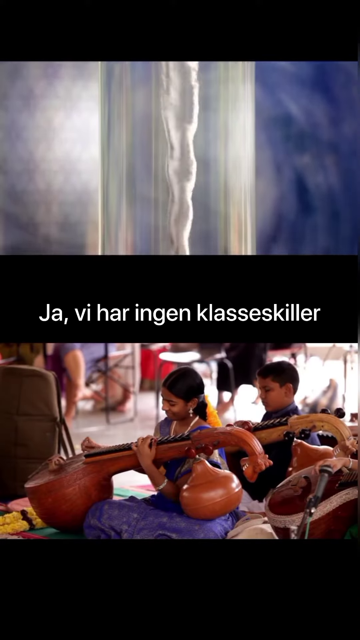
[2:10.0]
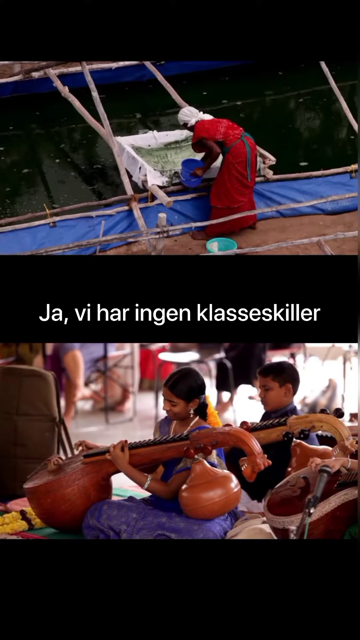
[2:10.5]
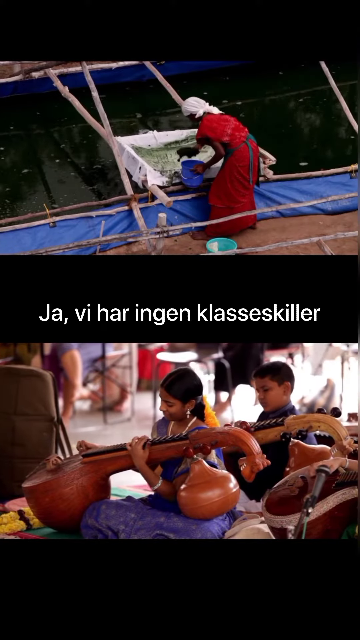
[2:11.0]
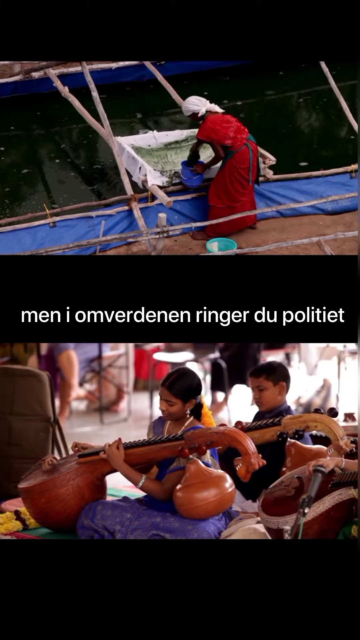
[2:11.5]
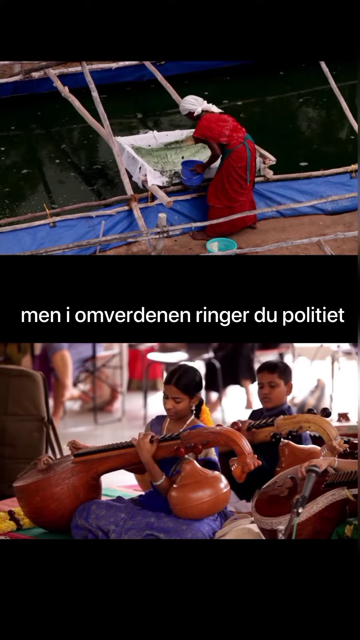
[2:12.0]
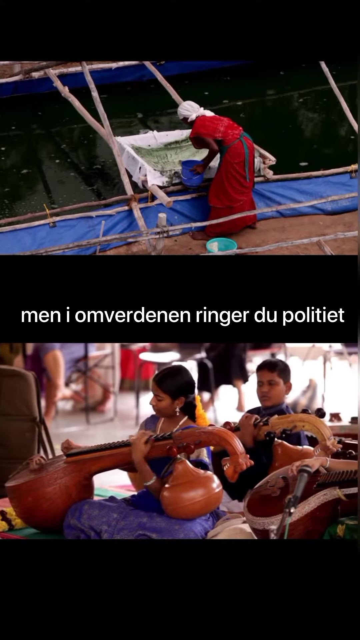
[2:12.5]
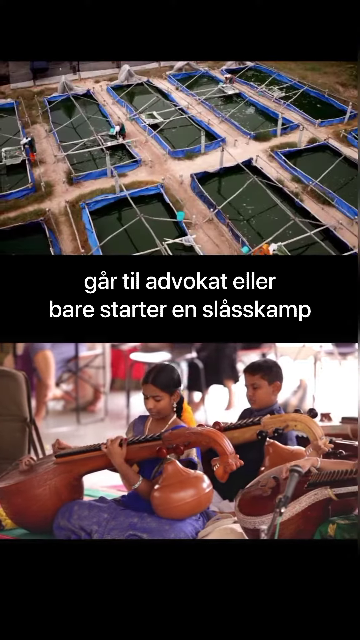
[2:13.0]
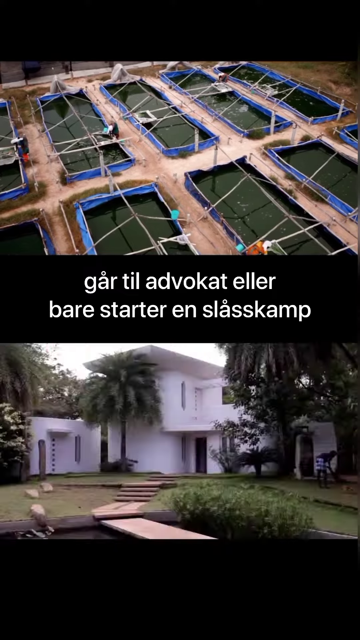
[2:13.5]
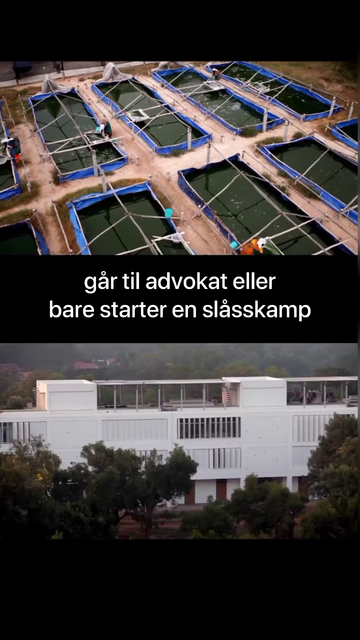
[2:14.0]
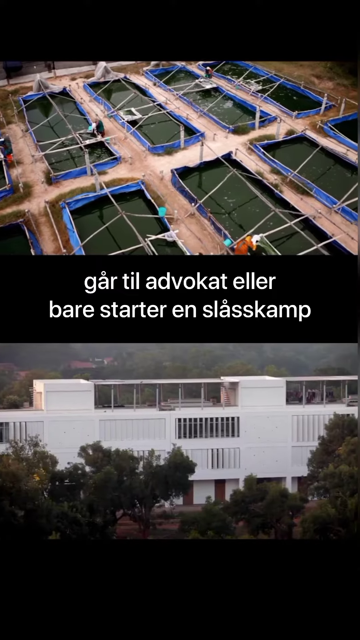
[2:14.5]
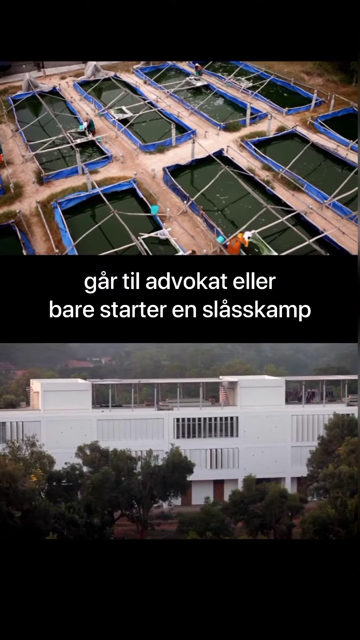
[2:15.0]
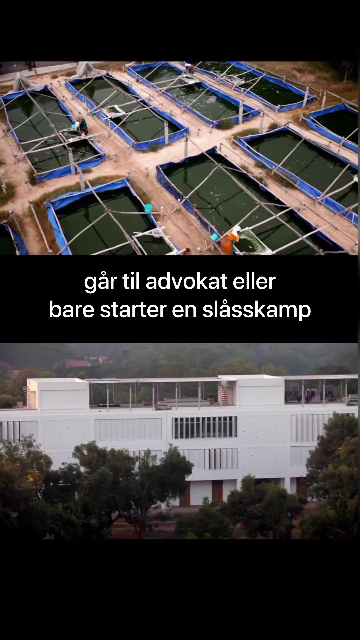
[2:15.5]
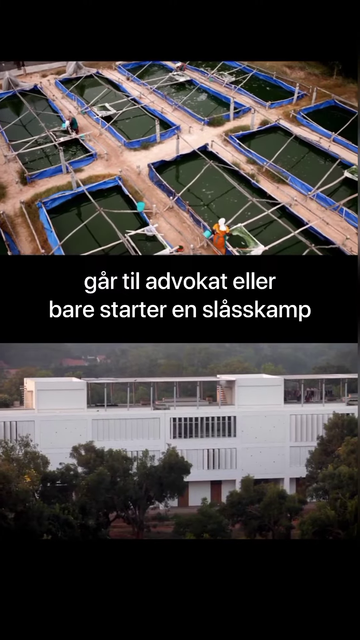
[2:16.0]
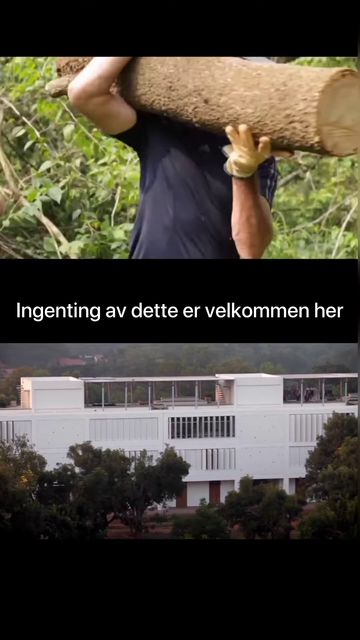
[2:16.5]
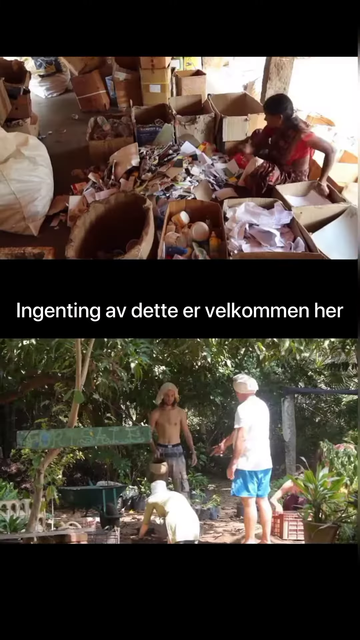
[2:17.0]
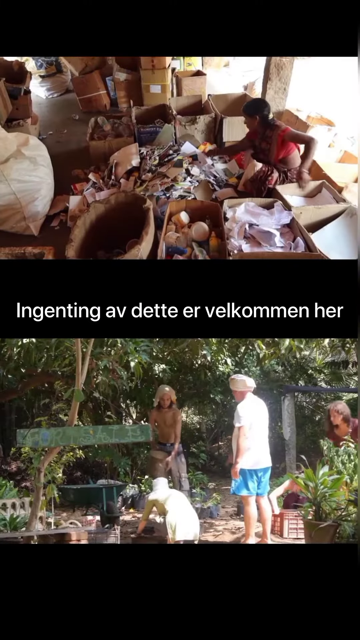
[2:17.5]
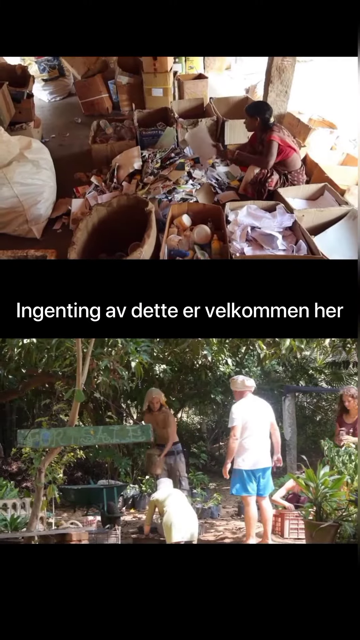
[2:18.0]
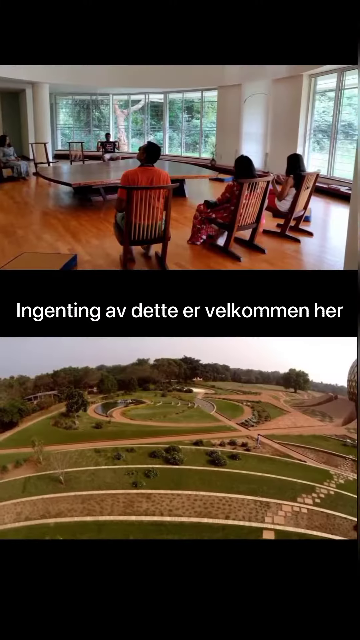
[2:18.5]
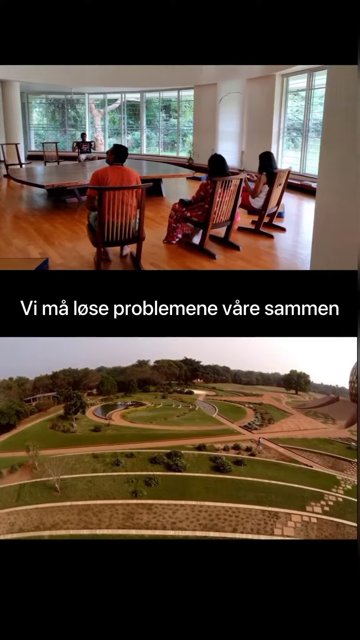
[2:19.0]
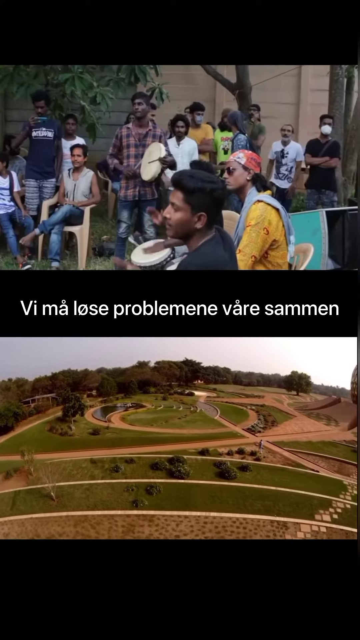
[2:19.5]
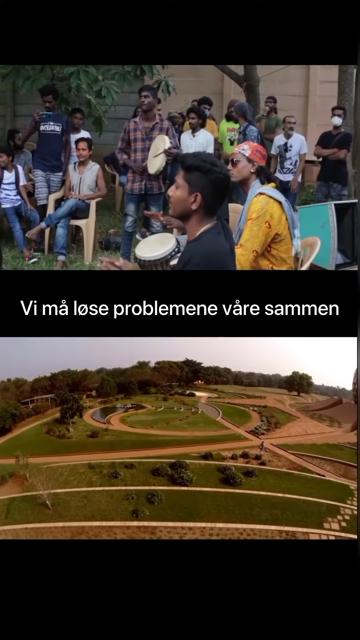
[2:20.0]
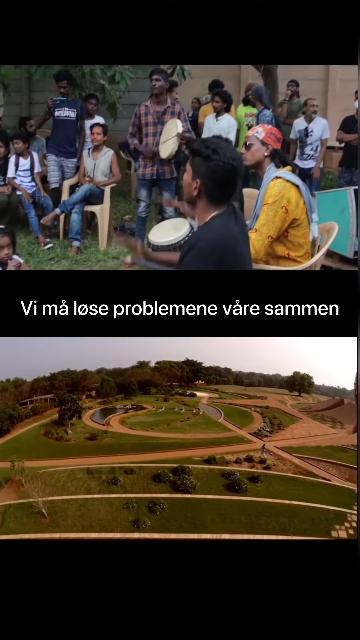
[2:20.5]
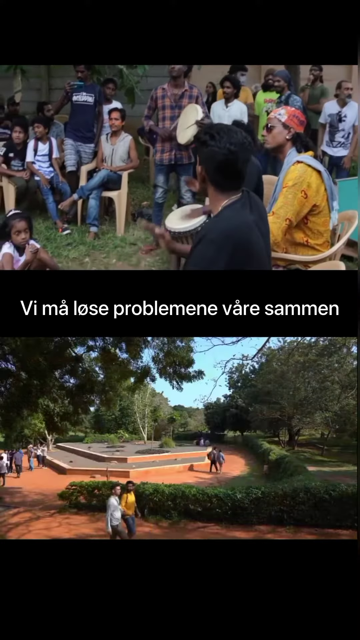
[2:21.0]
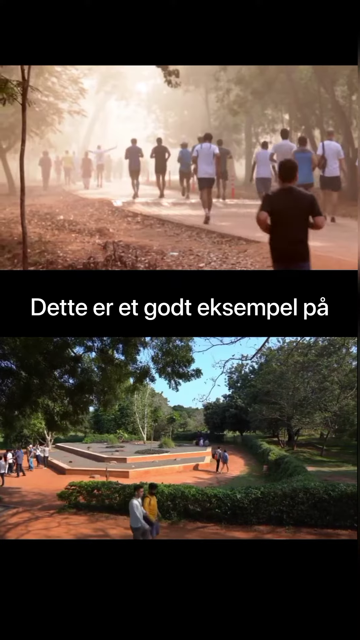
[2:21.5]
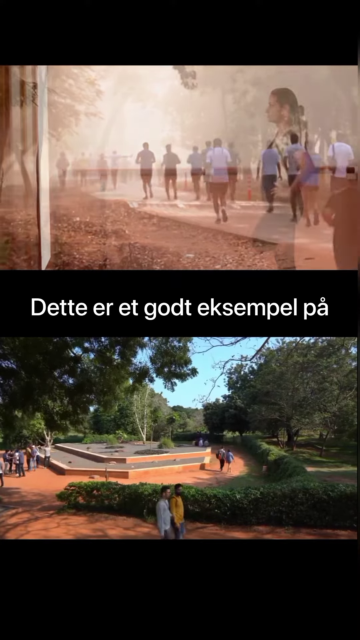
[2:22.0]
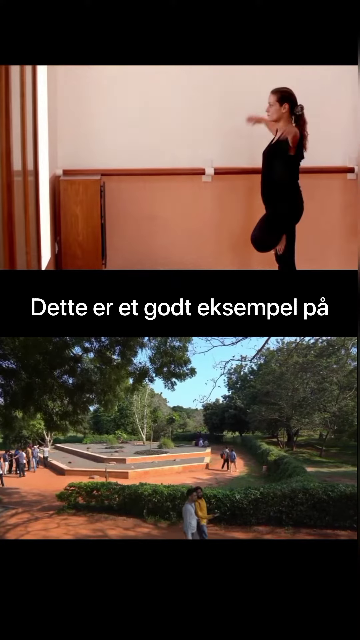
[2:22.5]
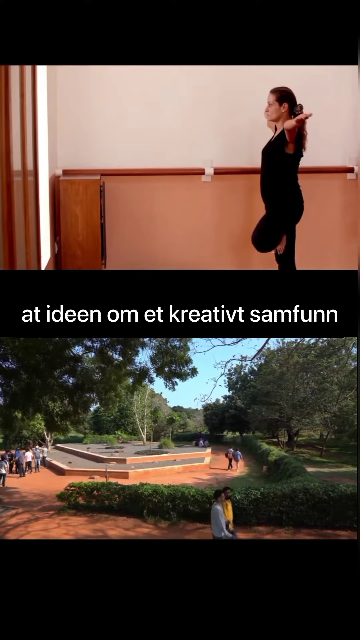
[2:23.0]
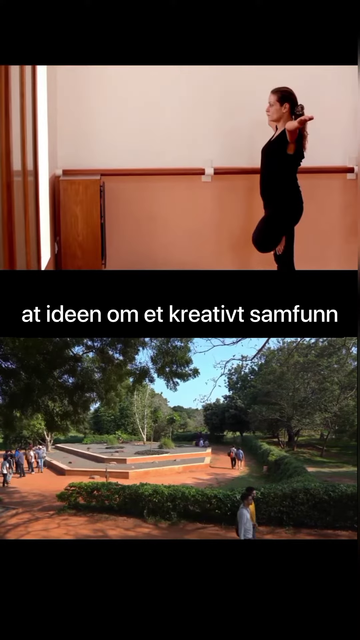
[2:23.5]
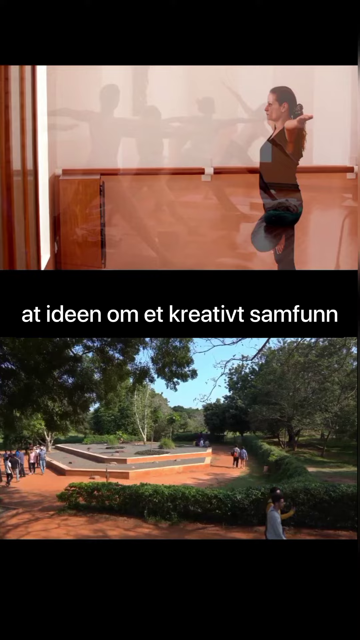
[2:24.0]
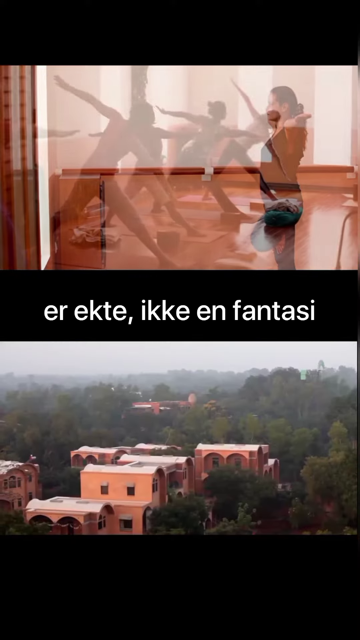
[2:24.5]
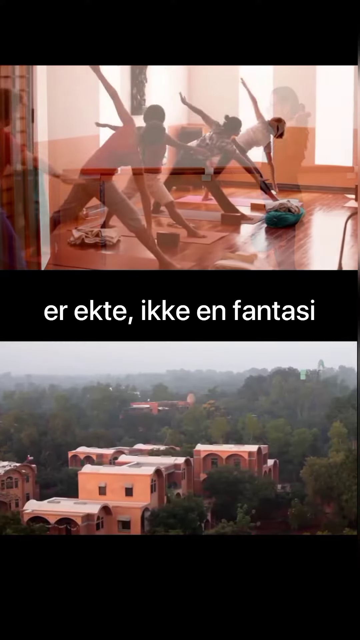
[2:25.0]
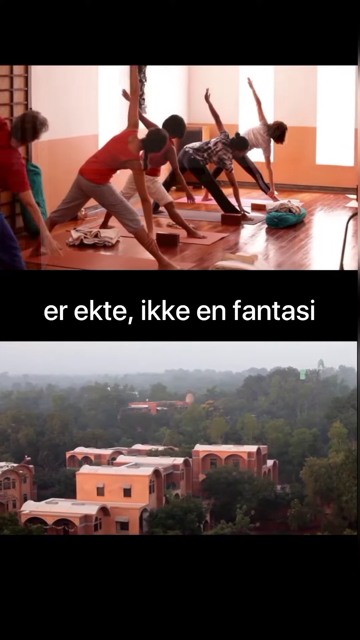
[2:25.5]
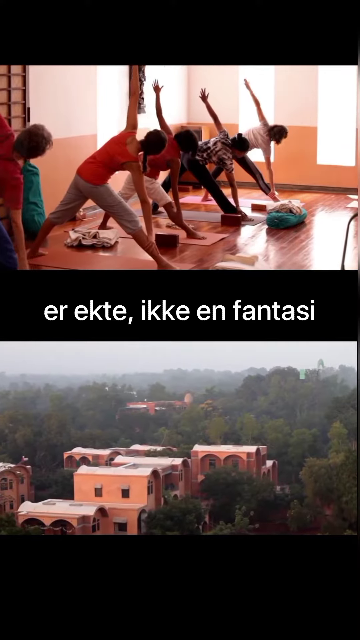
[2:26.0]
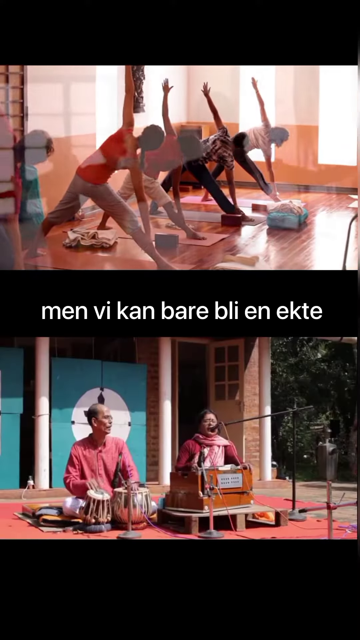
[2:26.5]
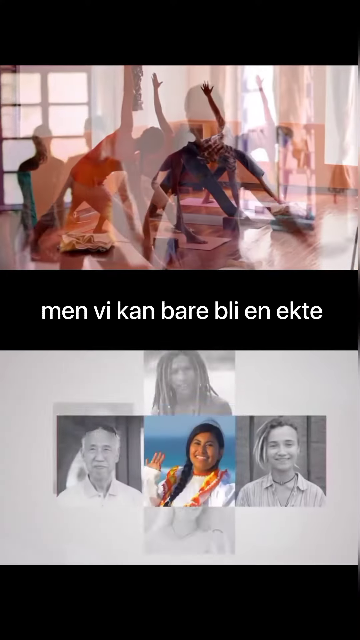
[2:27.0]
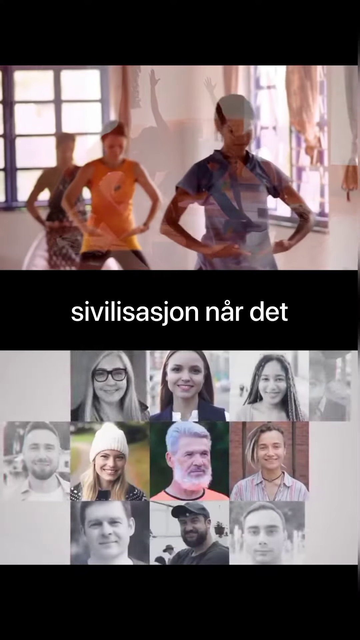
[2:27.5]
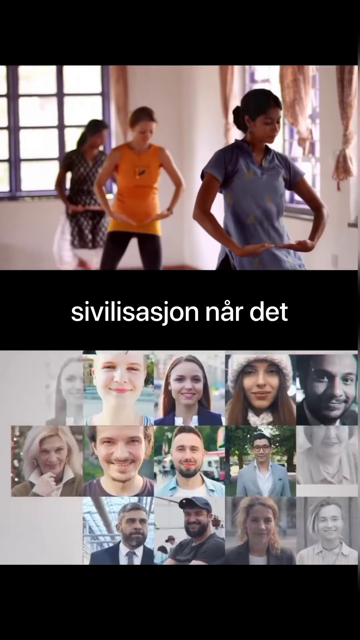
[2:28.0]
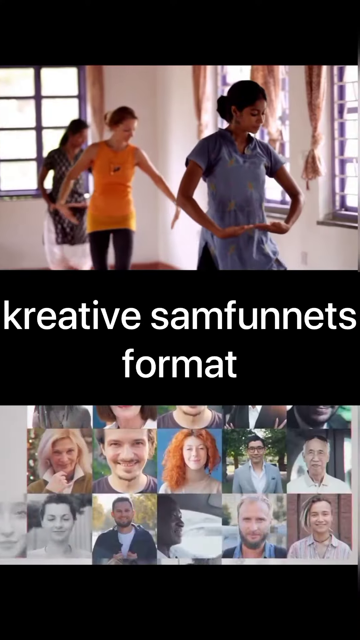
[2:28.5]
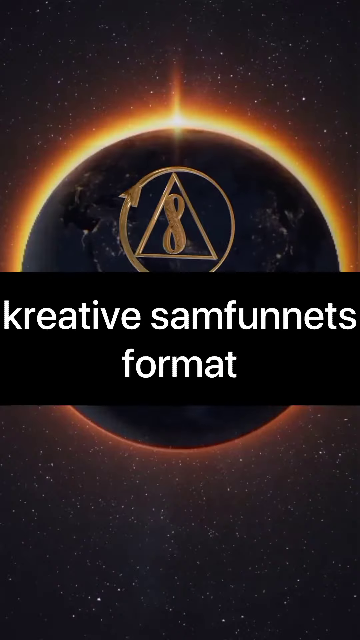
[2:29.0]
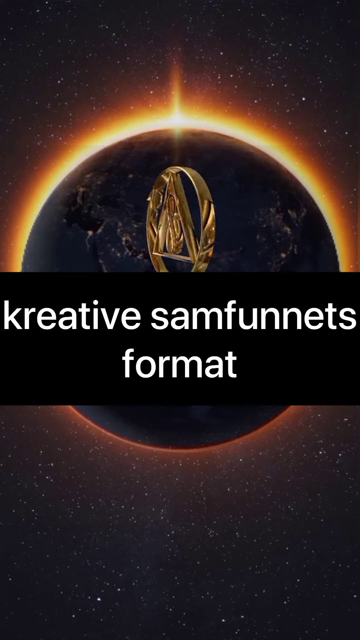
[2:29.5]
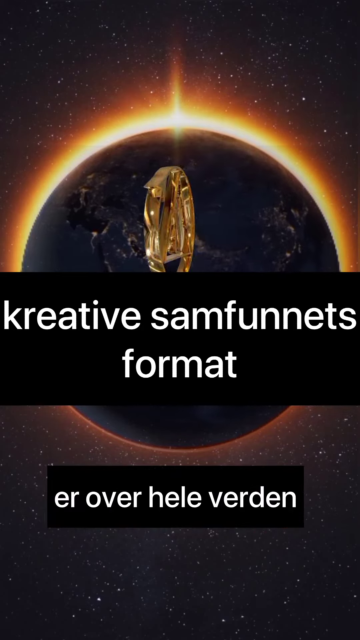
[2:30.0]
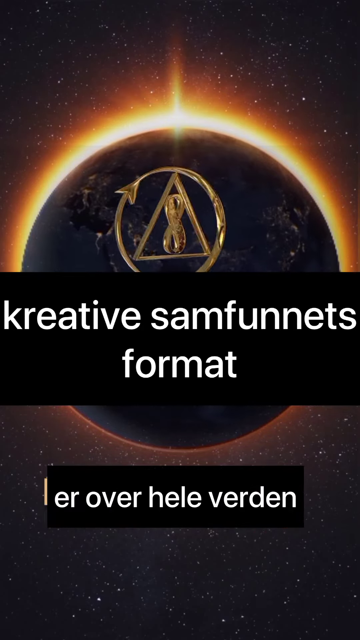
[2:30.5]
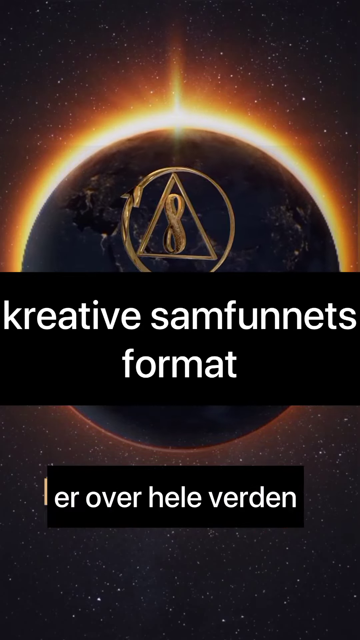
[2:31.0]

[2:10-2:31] People are rebuilding the area, and there are many nature shots. People do yoga and play instruments. Then a grid of around six by six different faces appears, with the faces changing, as the video wraps up, and then the video ends.